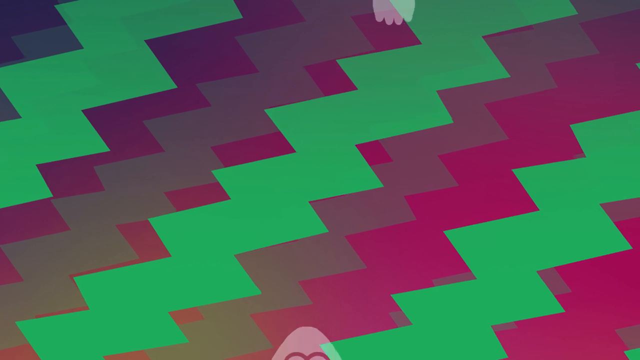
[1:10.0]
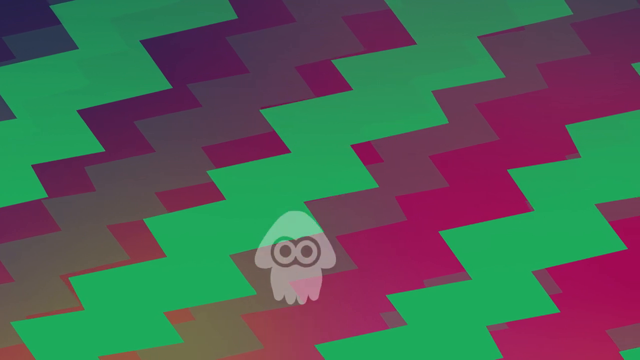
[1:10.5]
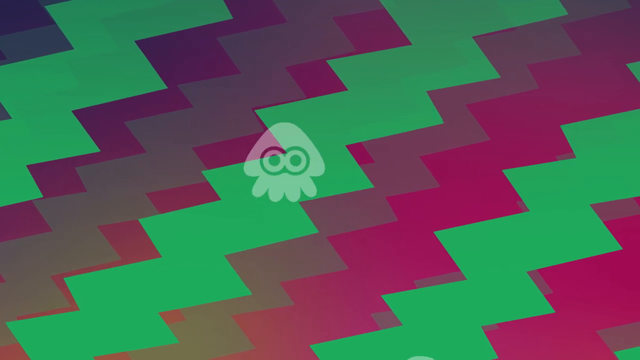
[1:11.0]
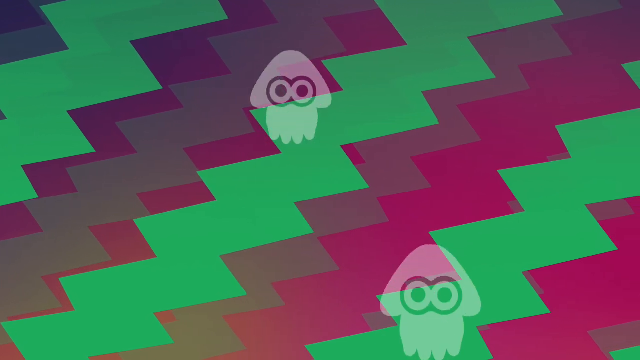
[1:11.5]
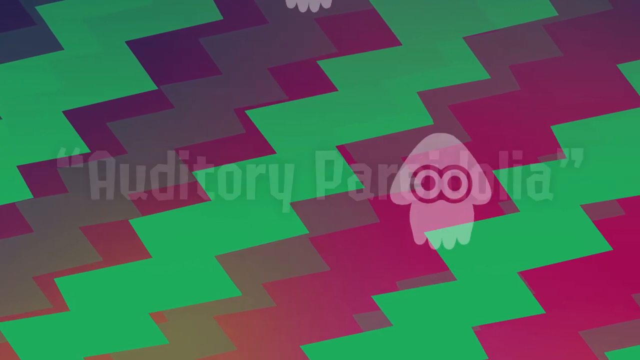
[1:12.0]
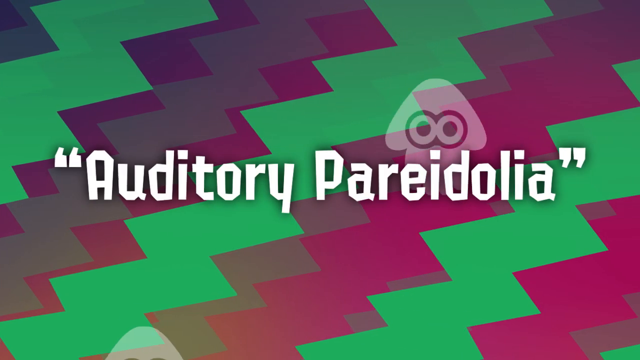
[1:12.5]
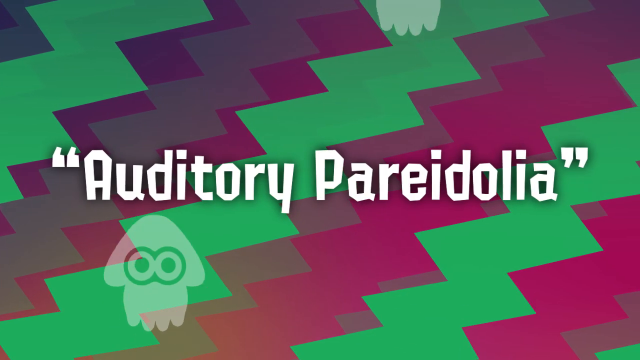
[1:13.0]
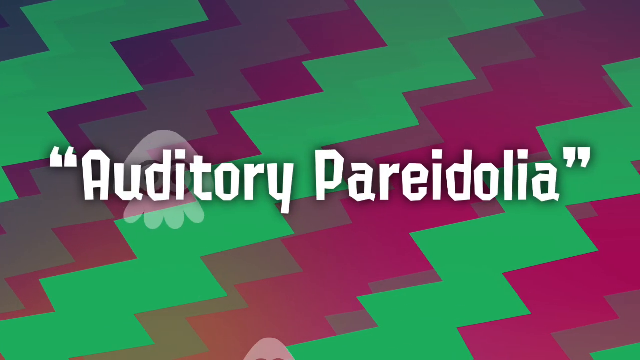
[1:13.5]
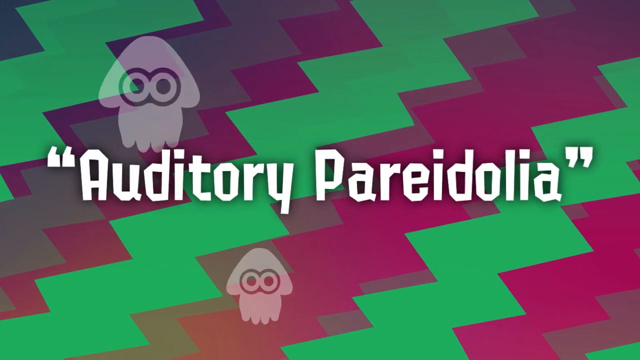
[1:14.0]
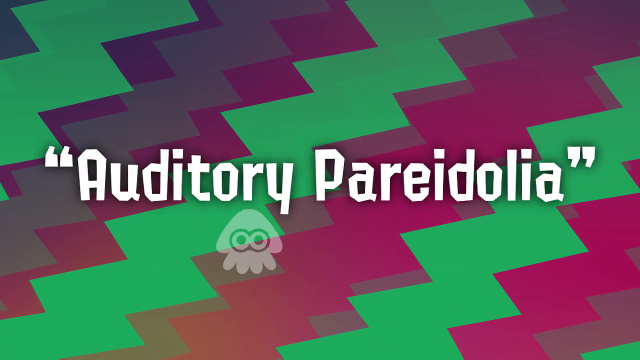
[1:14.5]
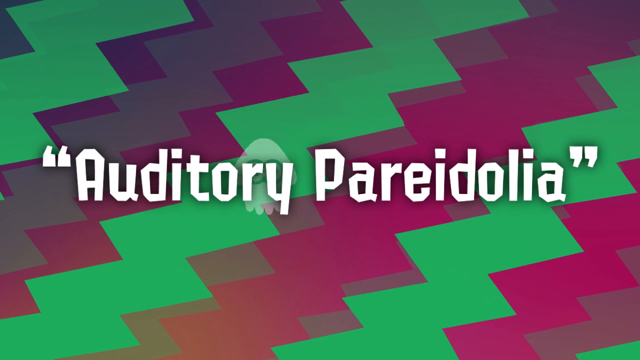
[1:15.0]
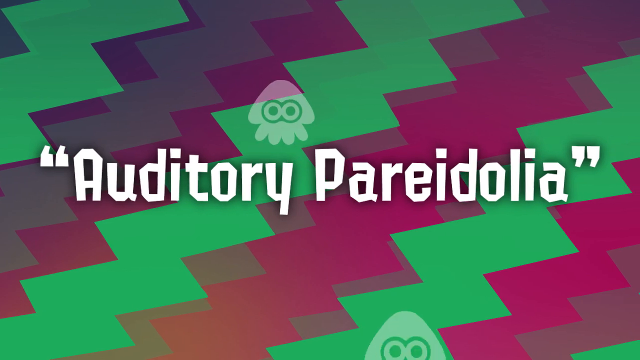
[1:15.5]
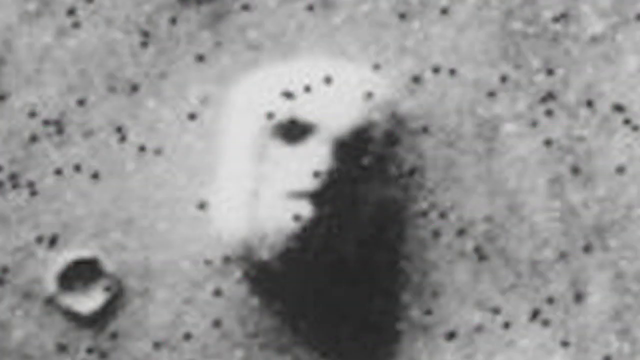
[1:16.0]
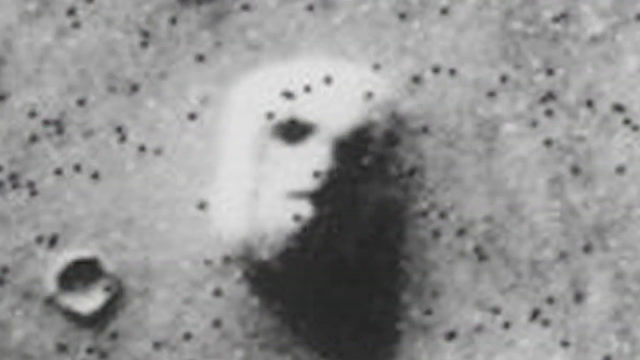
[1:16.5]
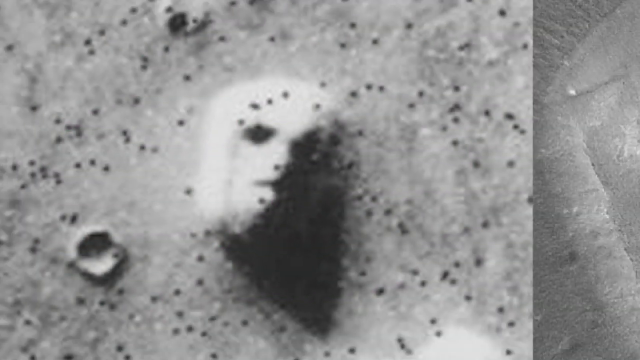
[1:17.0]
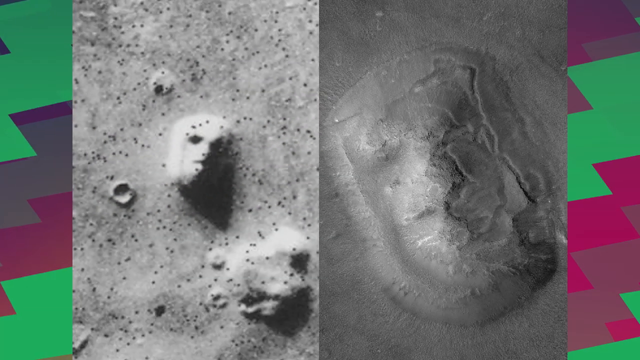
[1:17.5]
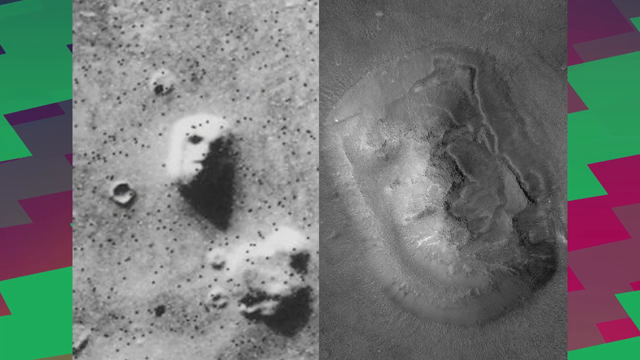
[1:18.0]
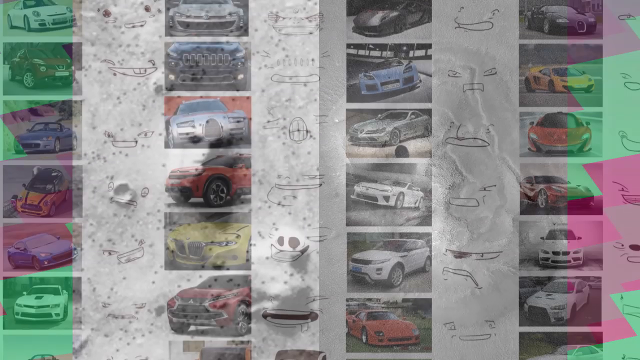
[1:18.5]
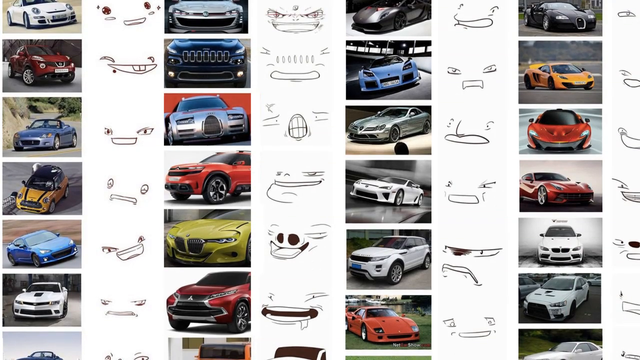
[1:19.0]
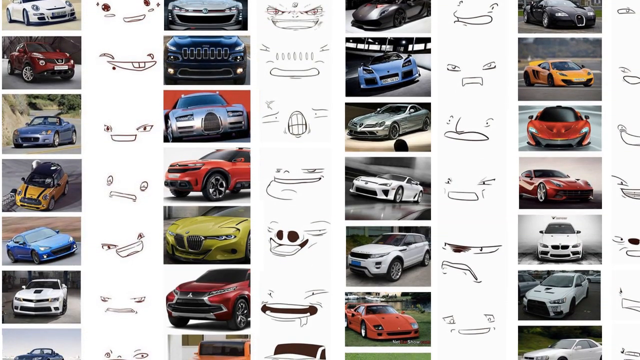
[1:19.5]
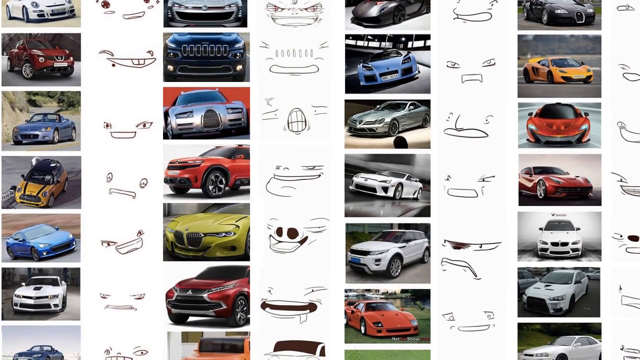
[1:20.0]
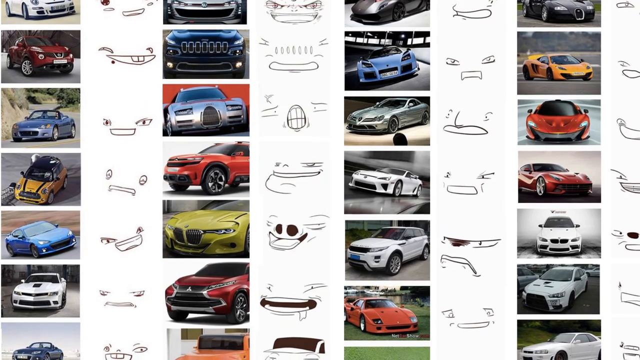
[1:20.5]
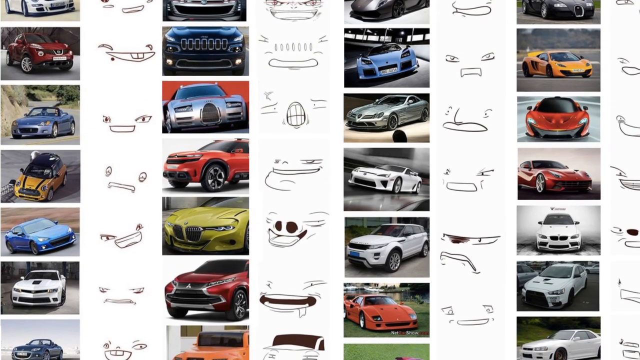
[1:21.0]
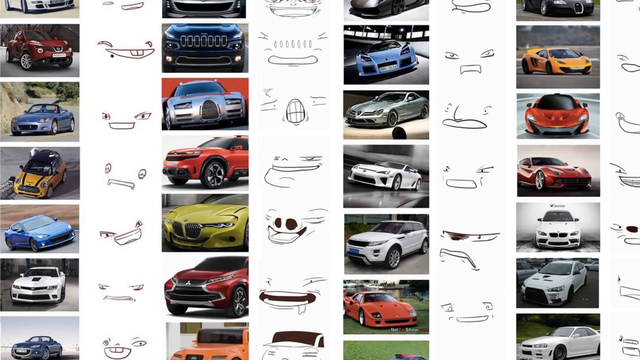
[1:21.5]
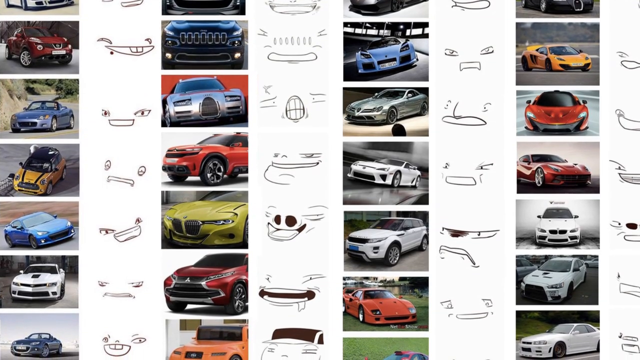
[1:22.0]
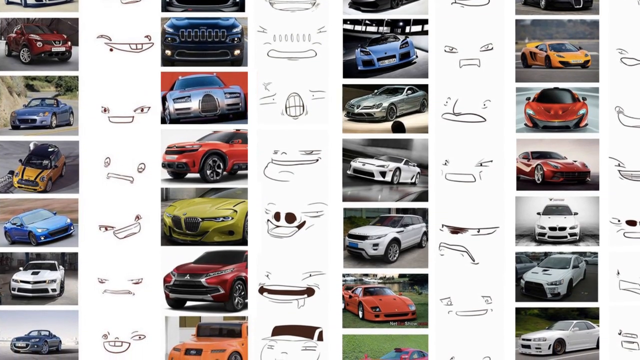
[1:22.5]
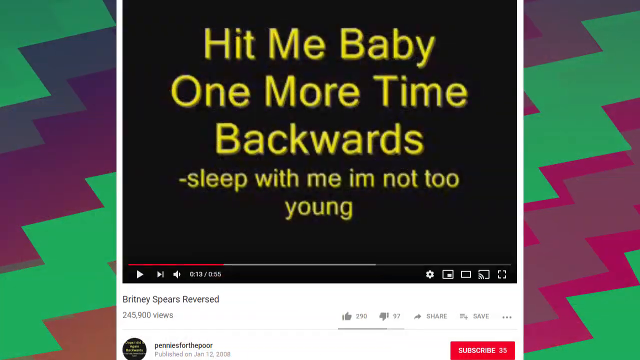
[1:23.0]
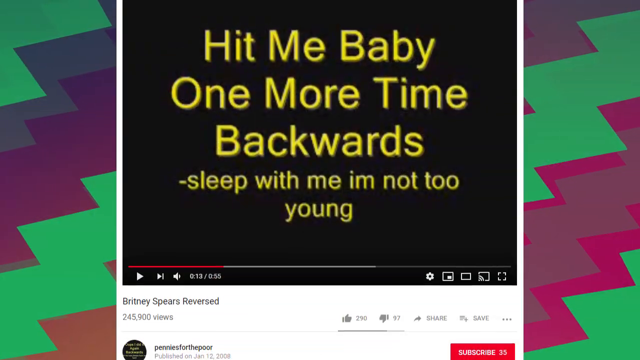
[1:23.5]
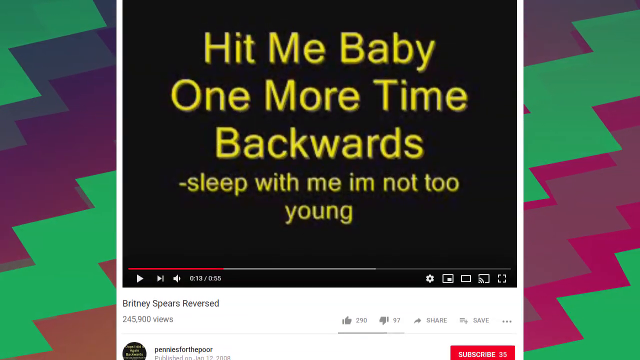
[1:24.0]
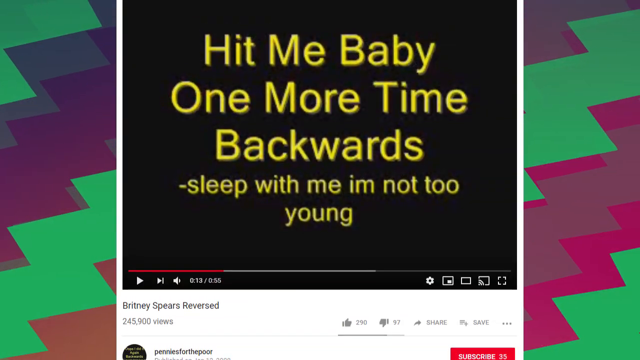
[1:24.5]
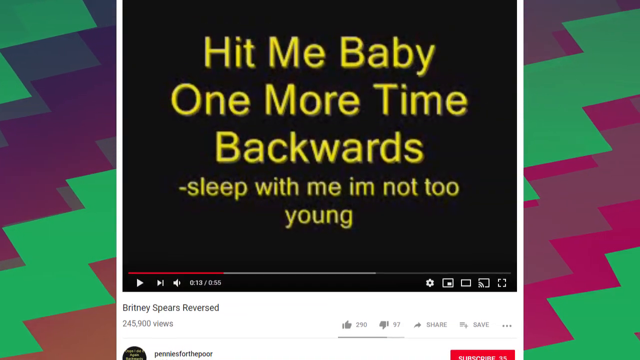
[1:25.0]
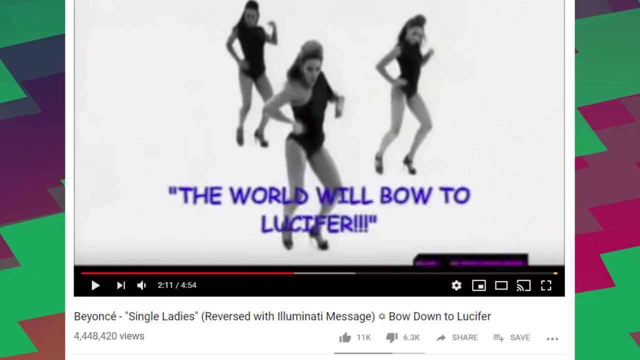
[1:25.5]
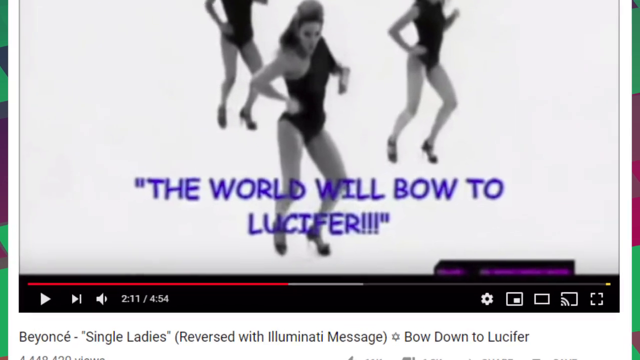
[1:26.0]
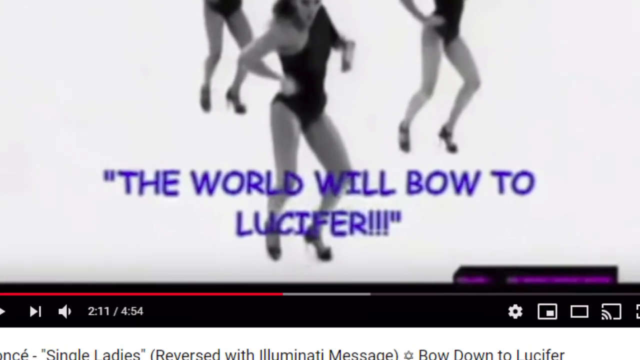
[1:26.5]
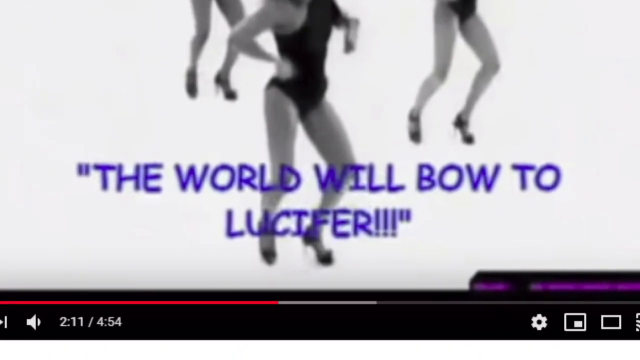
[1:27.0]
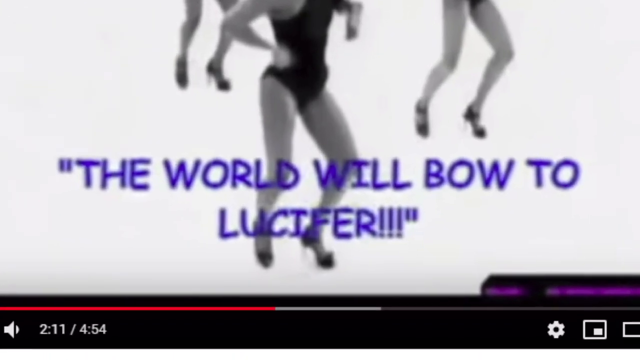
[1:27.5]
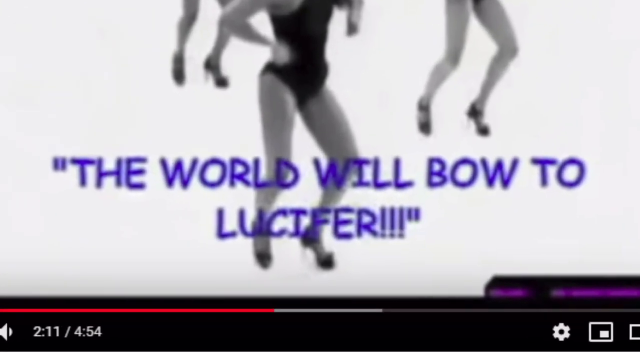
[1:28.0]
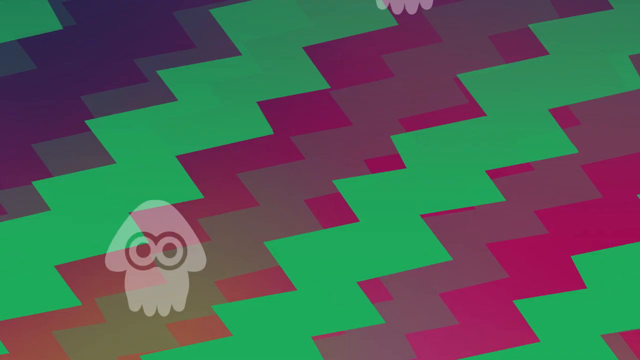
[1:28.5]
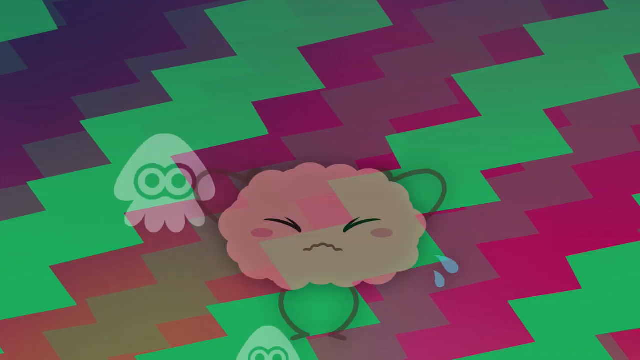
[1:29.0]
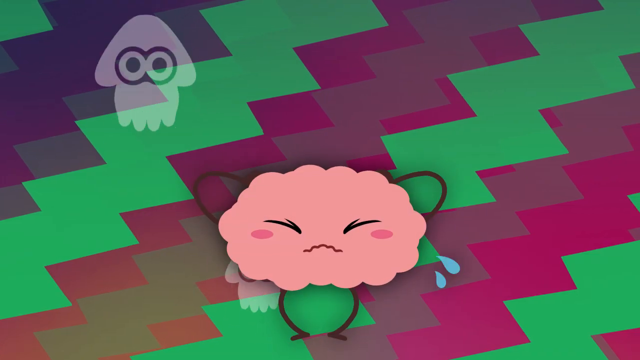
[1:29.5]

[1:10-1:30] New information appears, including the name Odidori Pareidola. Many cards are shown, with text such as "hit me baby one more time backwards", "the words will bore you" and "Lucifer".